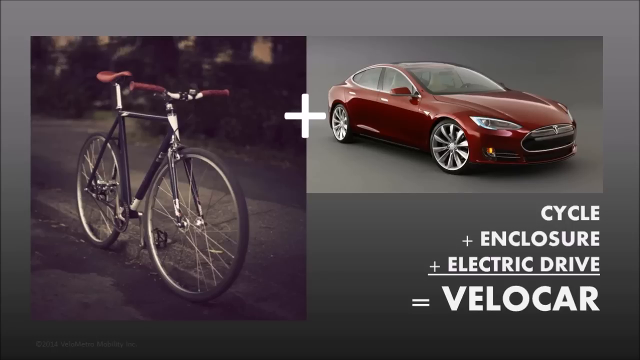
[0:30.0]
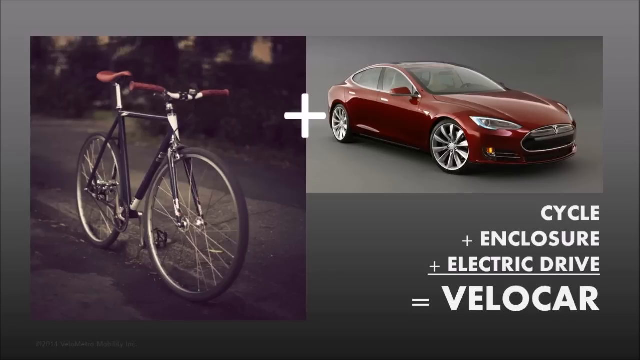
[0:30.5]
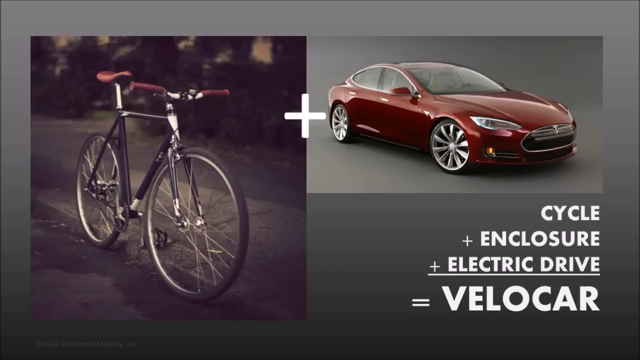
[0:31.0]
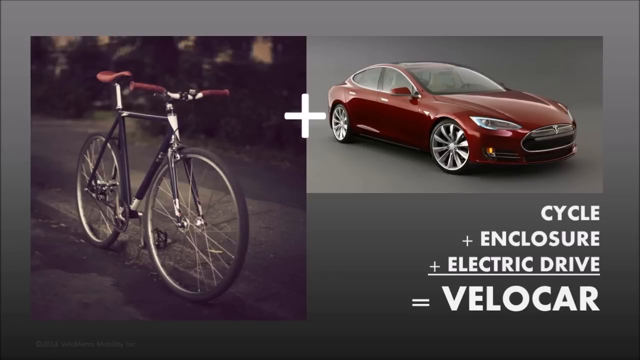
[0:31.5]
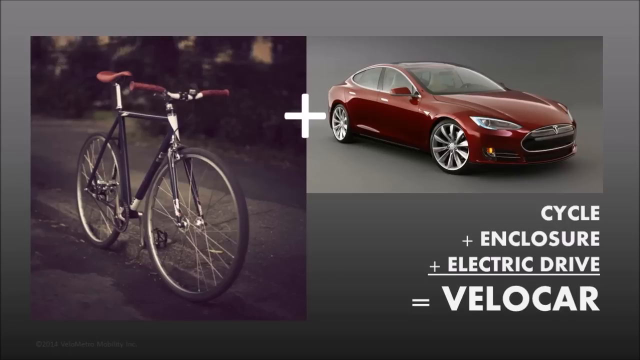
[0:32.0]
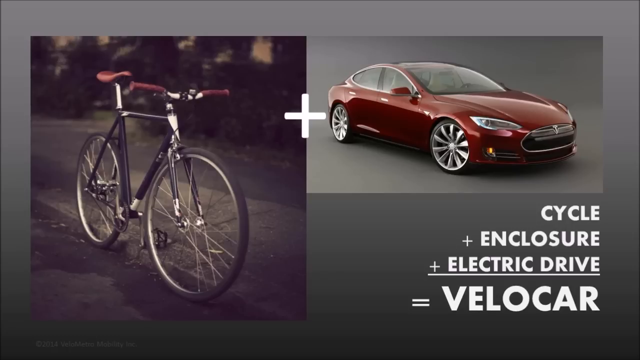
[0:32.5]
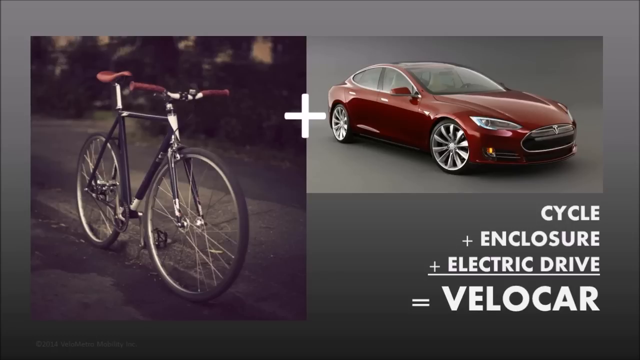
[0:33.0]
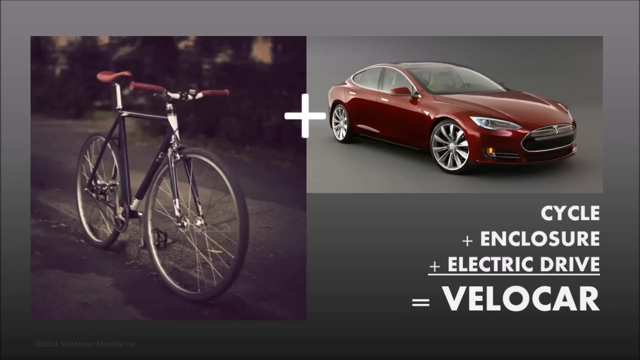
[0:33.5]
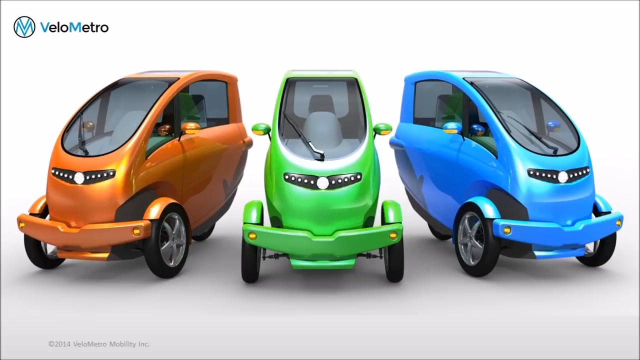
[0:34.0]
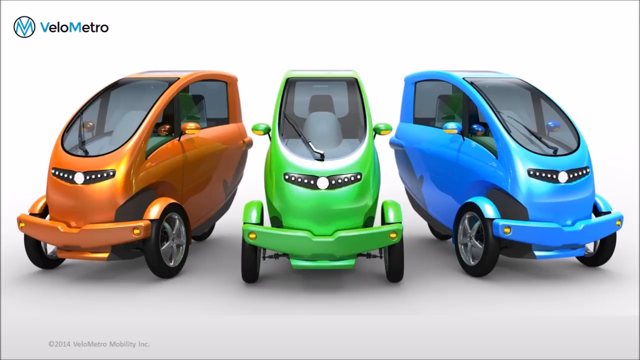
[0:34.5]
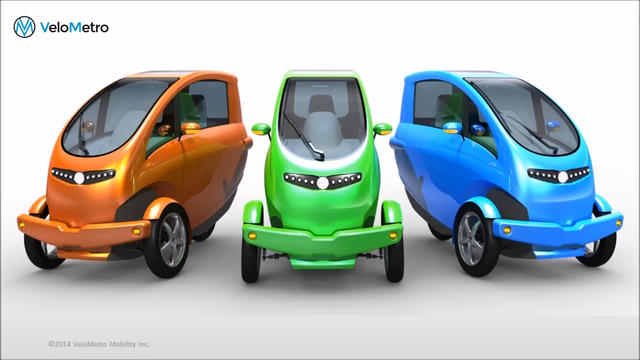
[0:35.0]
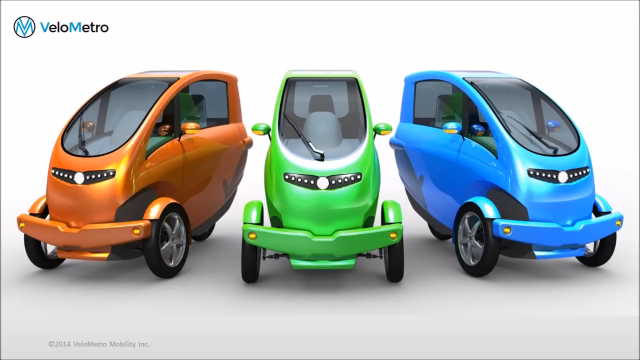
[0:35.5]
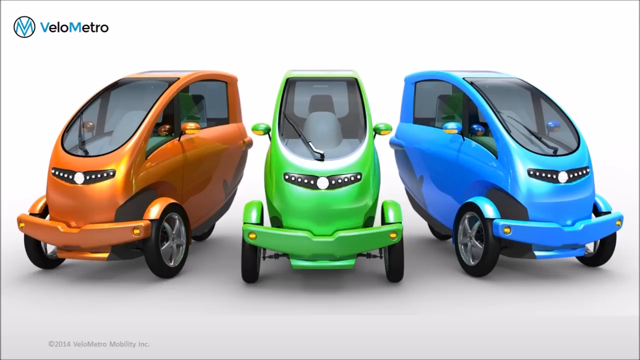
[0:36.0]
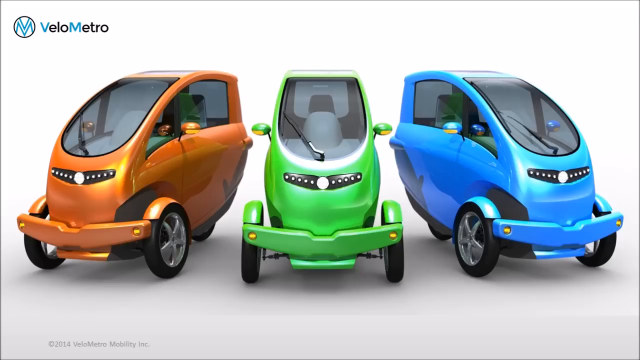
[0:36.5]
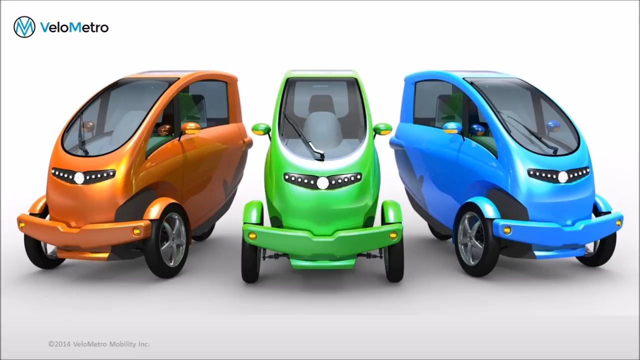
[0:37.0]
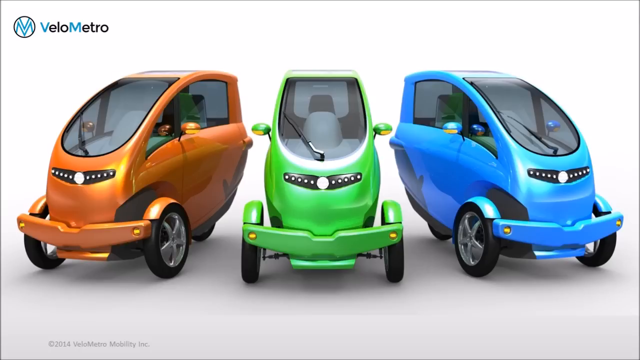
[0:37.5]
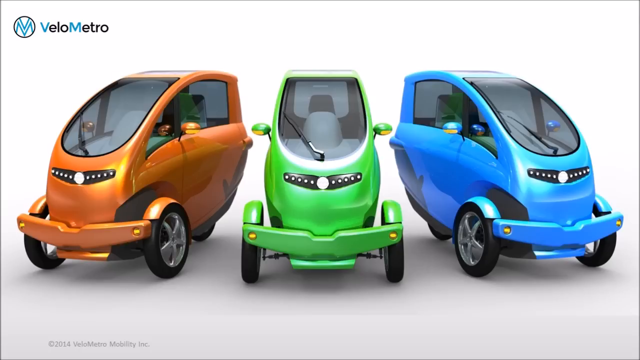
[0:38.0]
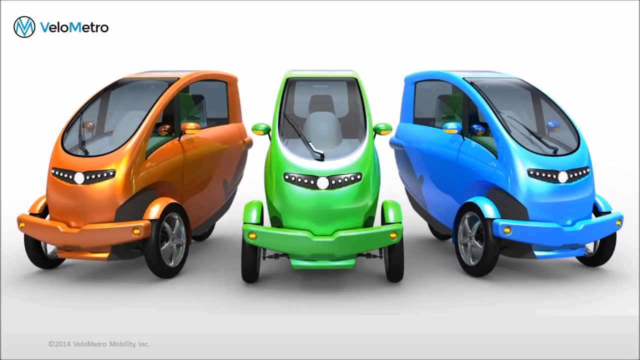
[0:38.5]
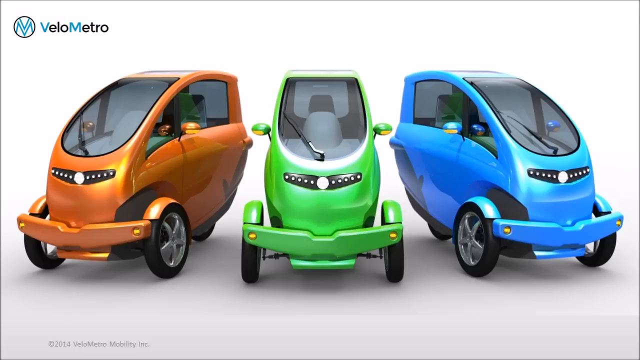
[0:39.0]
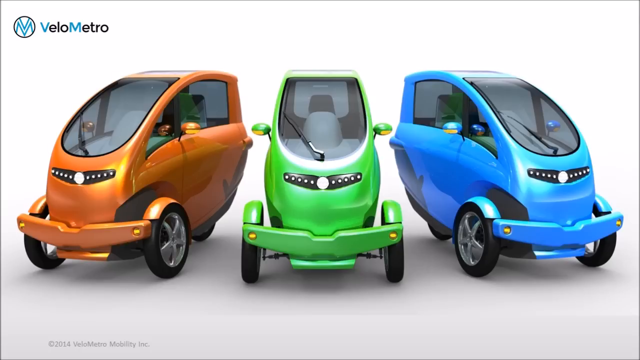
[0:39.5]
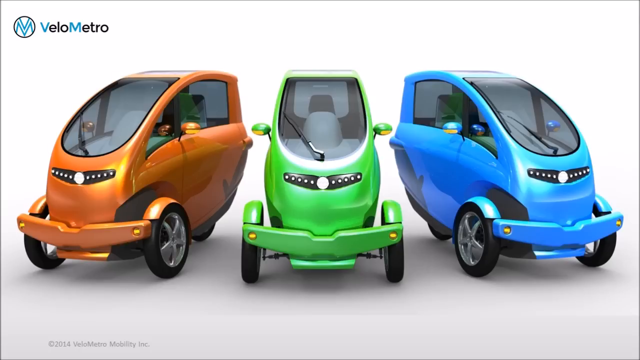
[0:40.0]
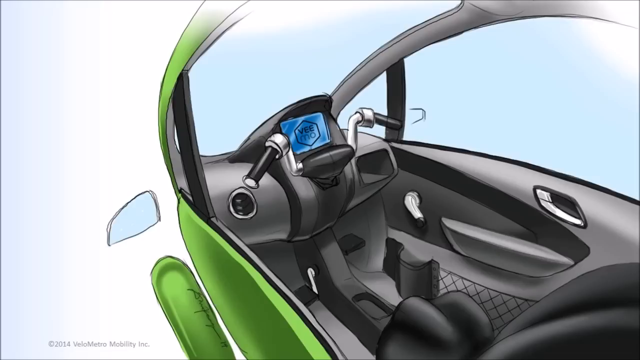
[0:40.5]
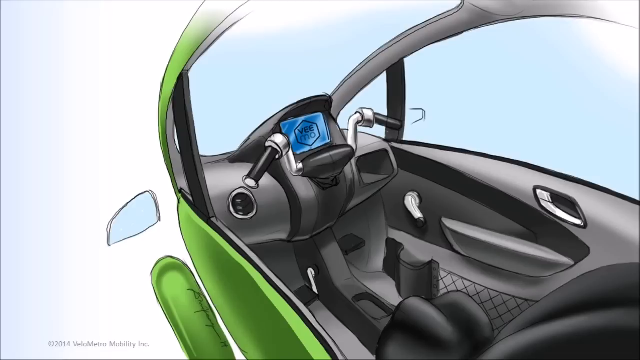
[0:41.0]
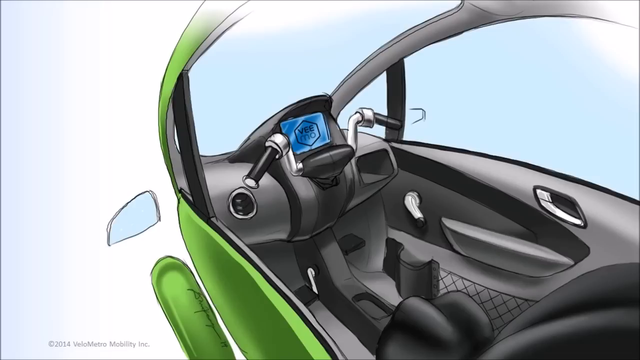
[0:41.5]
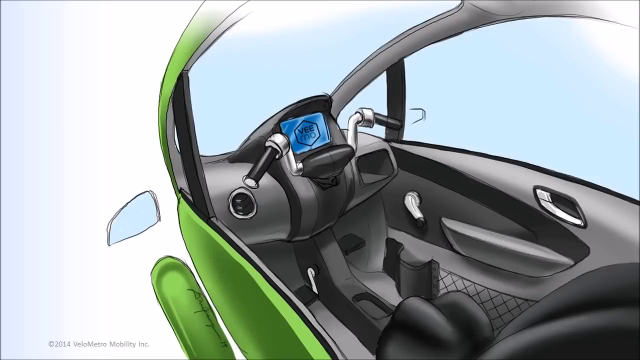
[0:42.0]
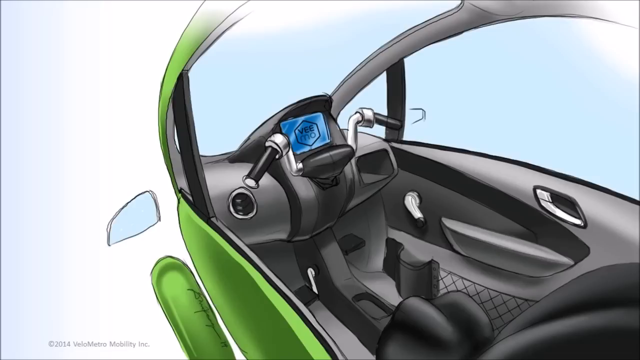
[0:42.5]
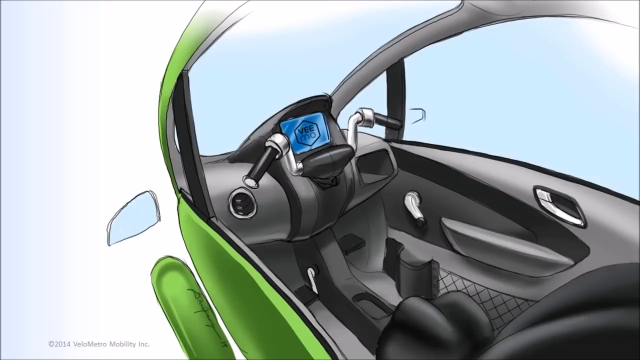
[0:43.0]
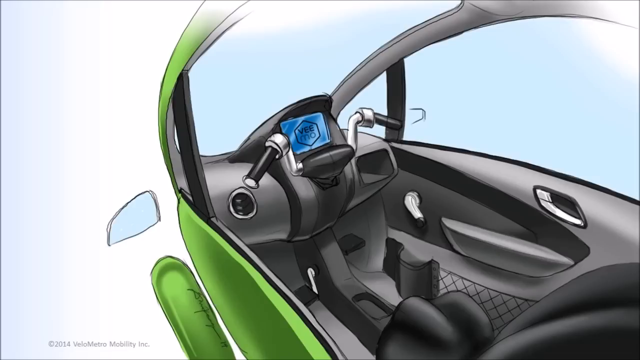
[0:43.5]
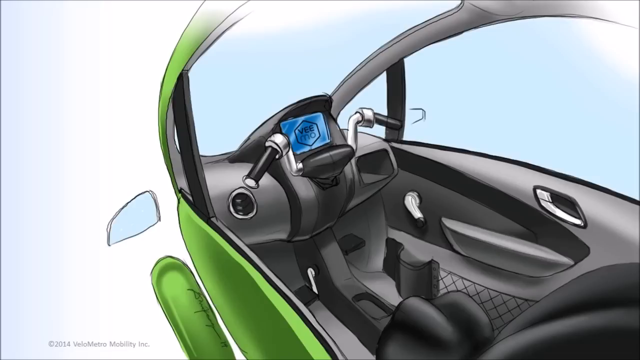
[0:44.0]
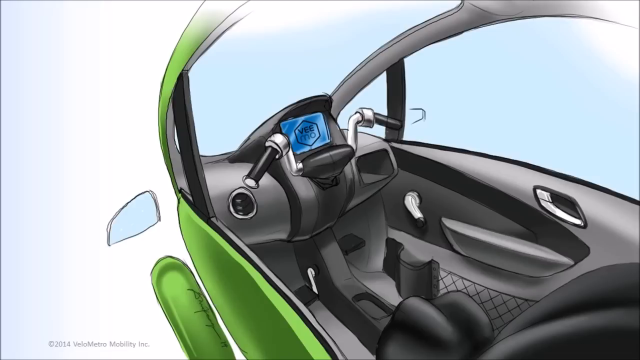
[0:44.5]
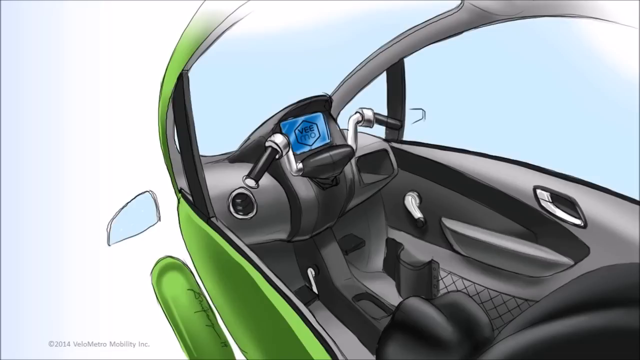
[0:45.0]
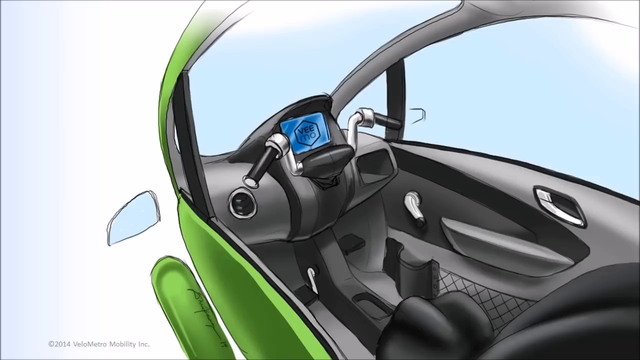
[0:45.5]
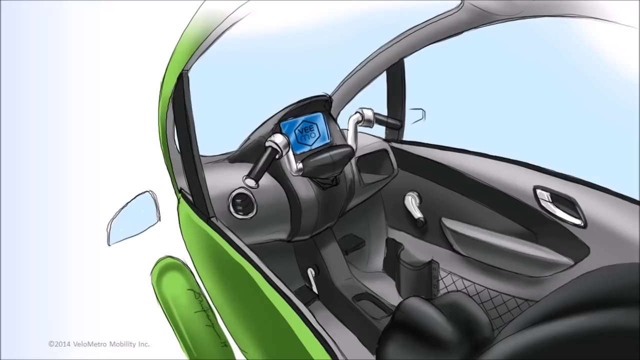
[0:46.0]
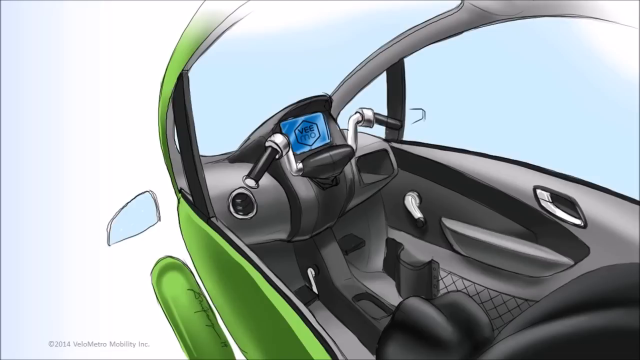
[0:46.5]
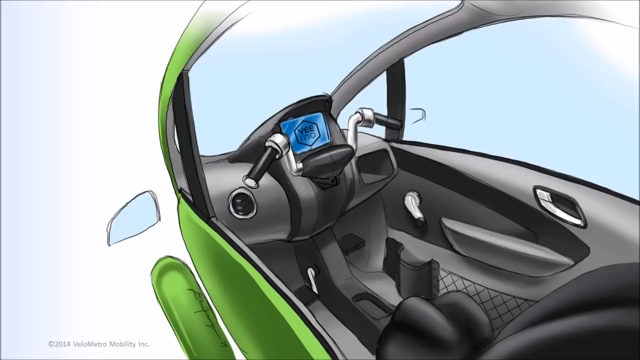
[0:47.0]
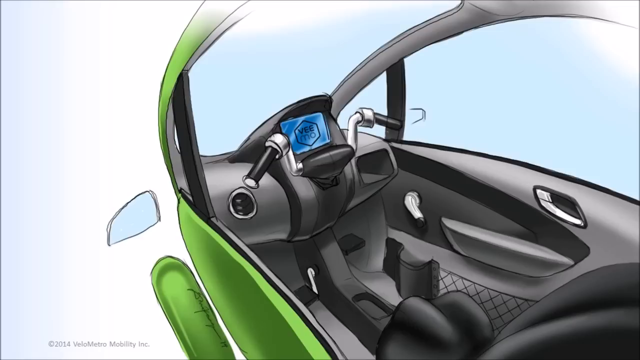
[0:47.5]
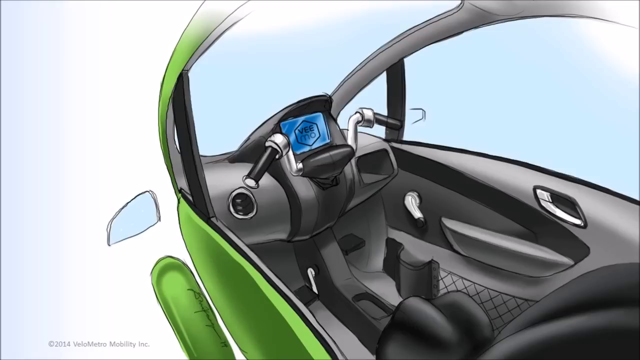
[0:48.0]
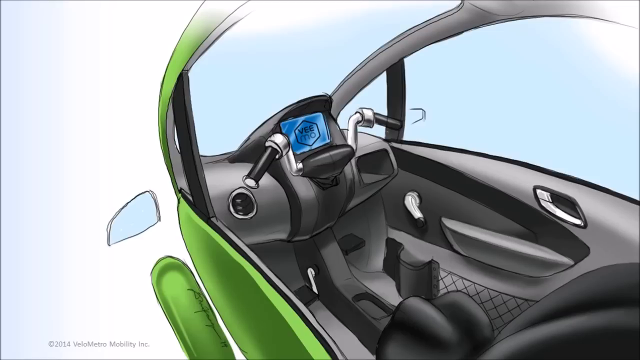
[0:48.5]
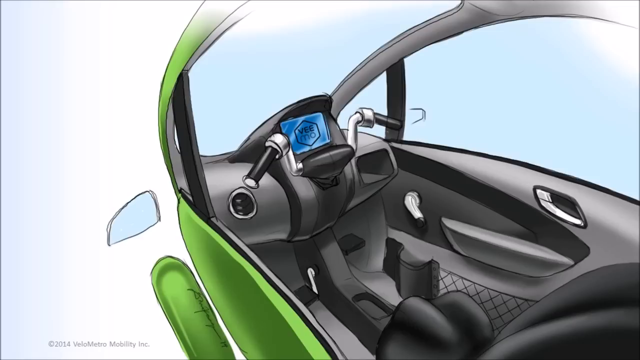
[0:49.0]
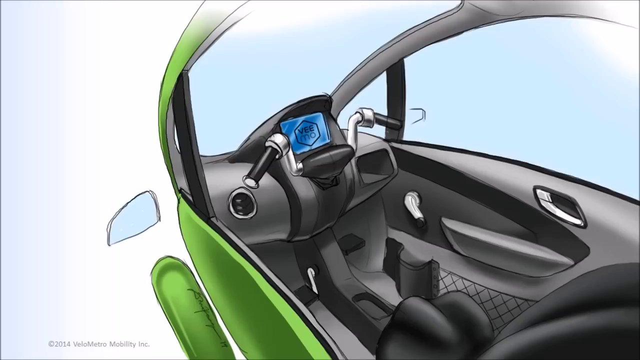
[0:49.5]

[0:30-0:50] A split screen shows a bicycle with some dark bushes behind it, a plus sign in the middle of the screen, and a maroon car. On the picture of the car, text reads "cycle plus enclosure plus electric drive equals VeloCar." A picture shows three extremely tiny one-seater cars in orange, green and blue, each with a bumper the same color as the car. The inside looks like a bicycle, with bicycle handles where the steering wheel would be and room for one. There is a pedal on the left side that looks black, a little netting on the right side to hold things, and door handles to open the car door. The windshield is very narrow and goes up and around, and the whole interior is very rounded.